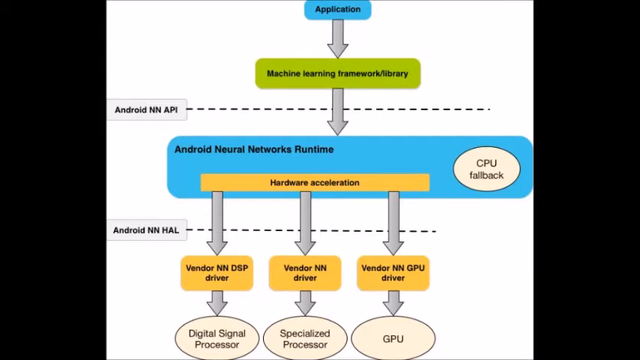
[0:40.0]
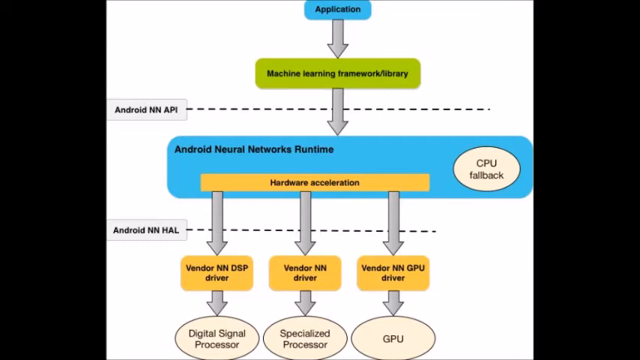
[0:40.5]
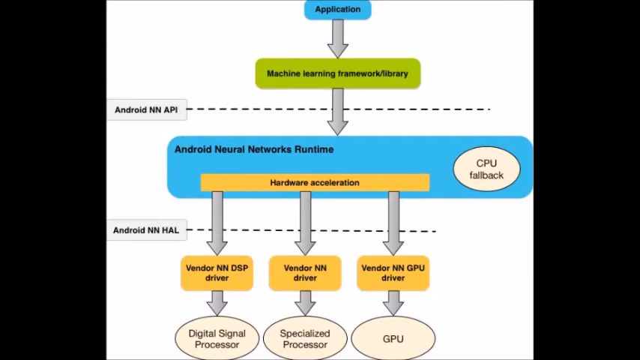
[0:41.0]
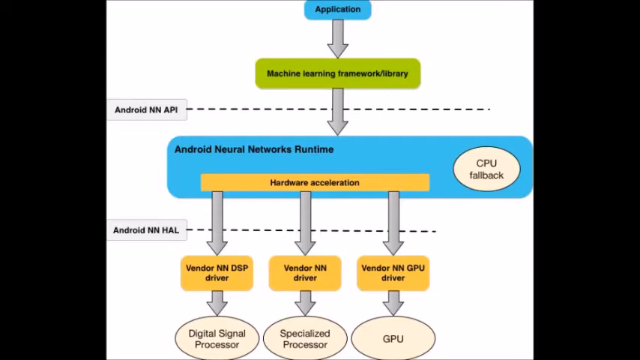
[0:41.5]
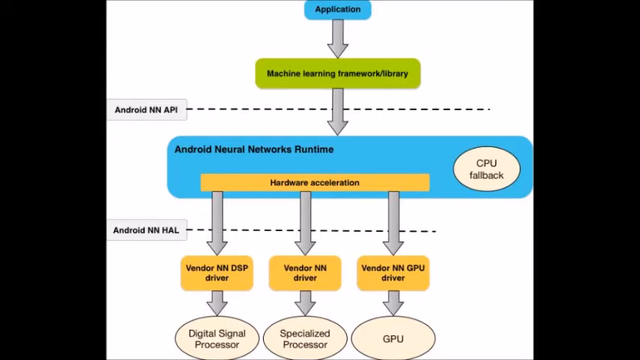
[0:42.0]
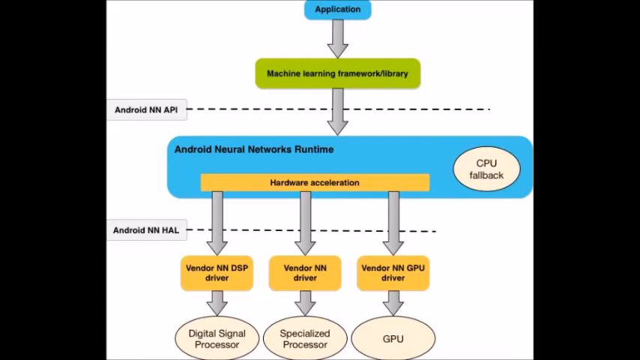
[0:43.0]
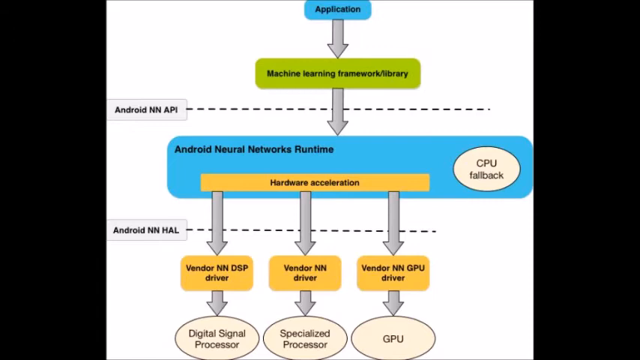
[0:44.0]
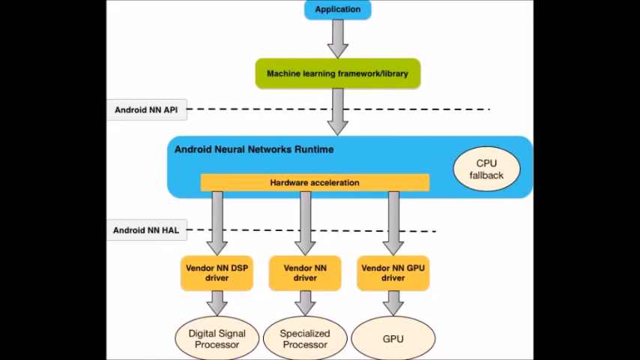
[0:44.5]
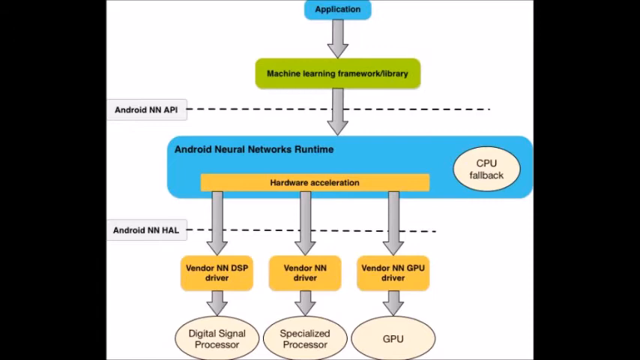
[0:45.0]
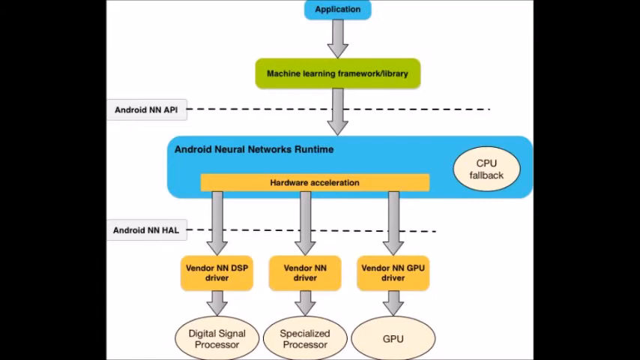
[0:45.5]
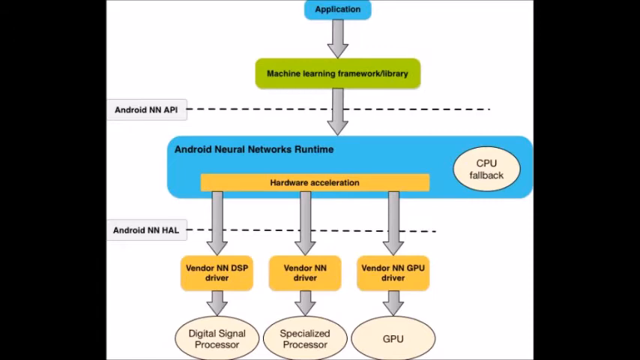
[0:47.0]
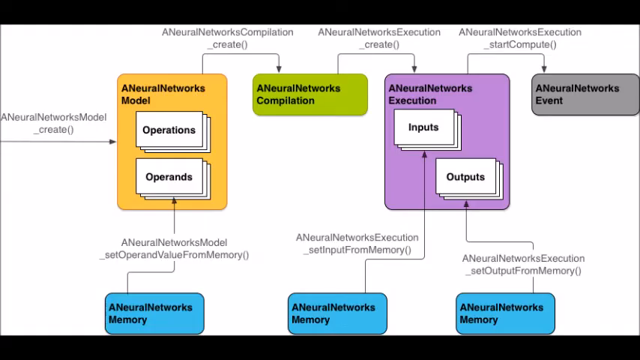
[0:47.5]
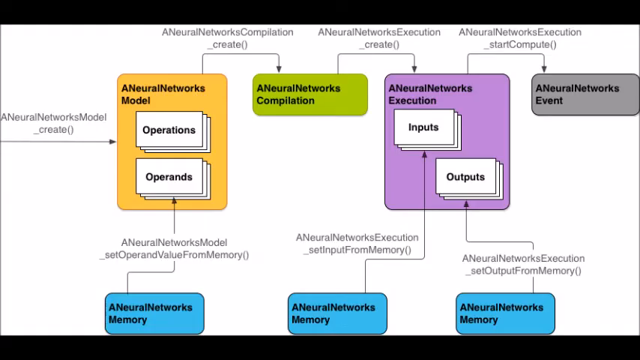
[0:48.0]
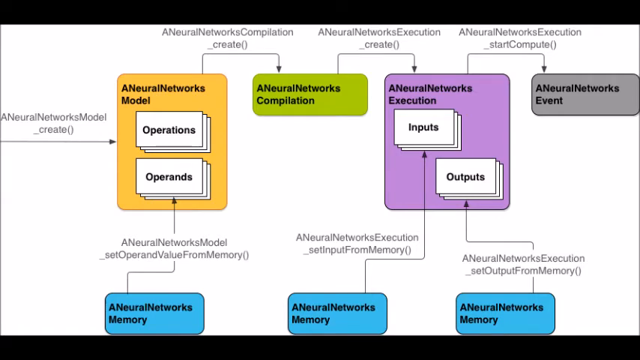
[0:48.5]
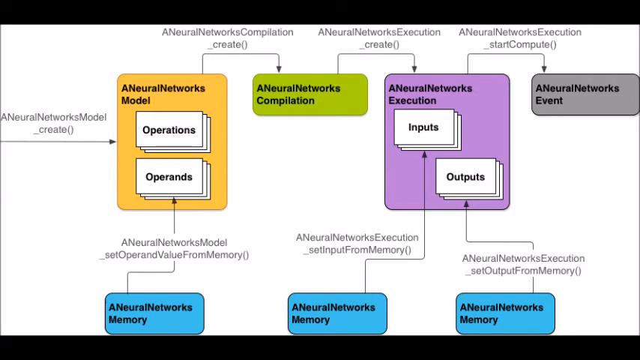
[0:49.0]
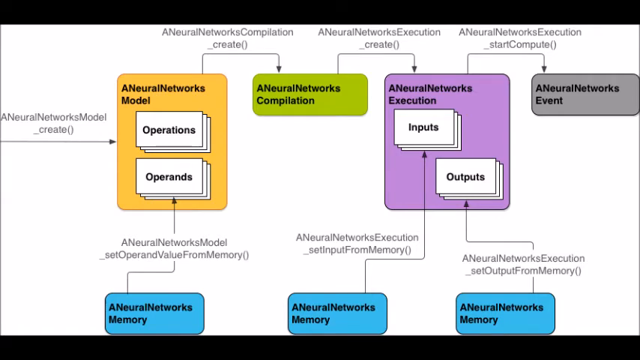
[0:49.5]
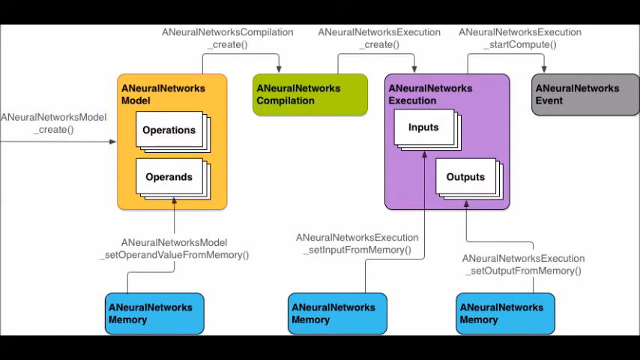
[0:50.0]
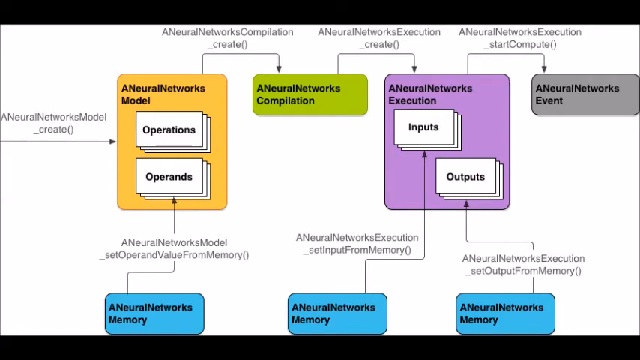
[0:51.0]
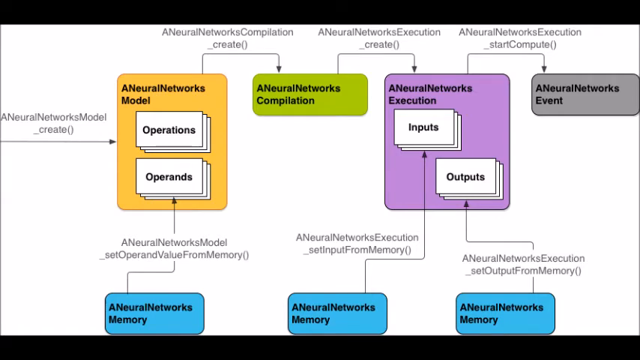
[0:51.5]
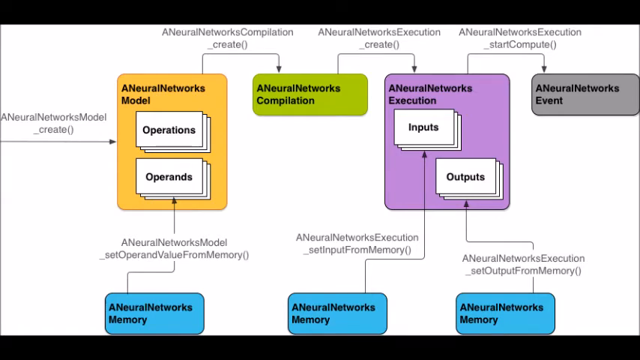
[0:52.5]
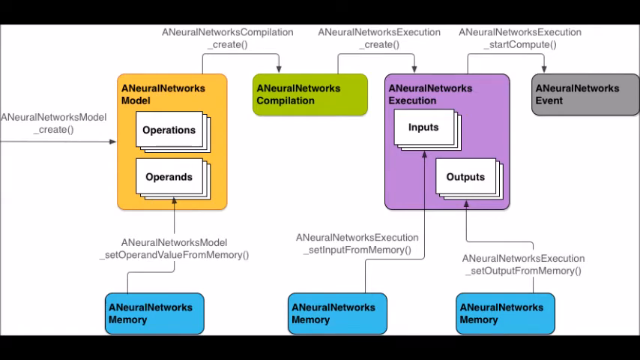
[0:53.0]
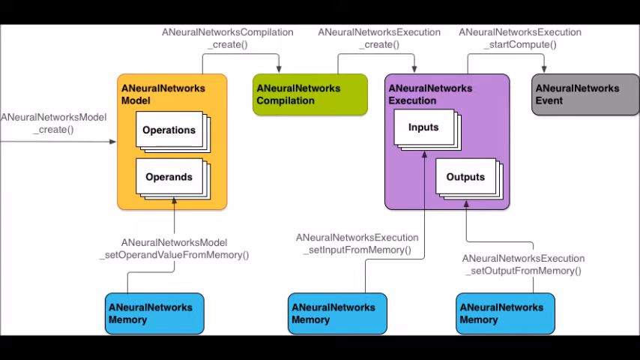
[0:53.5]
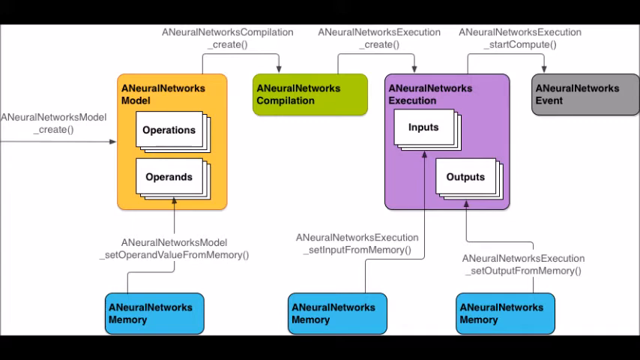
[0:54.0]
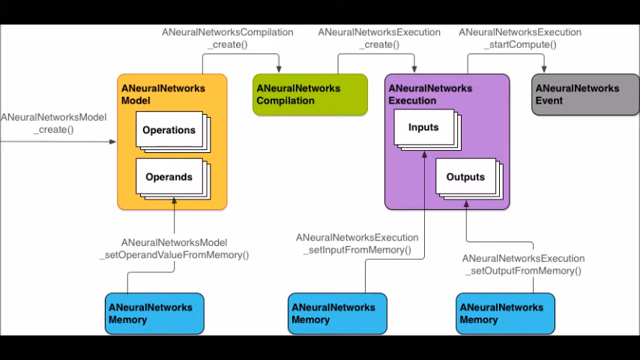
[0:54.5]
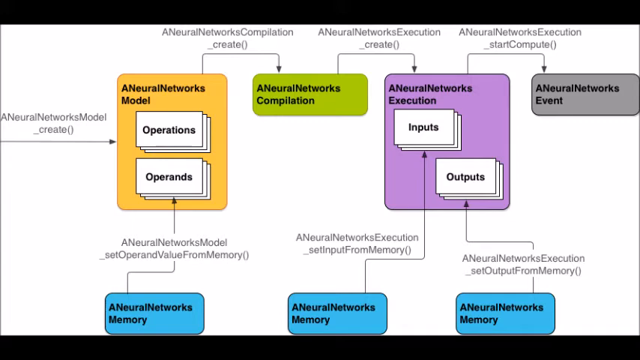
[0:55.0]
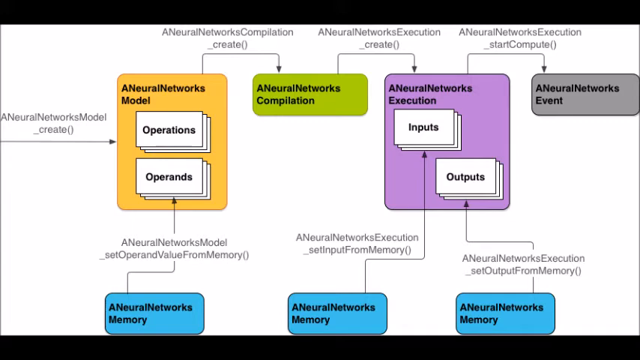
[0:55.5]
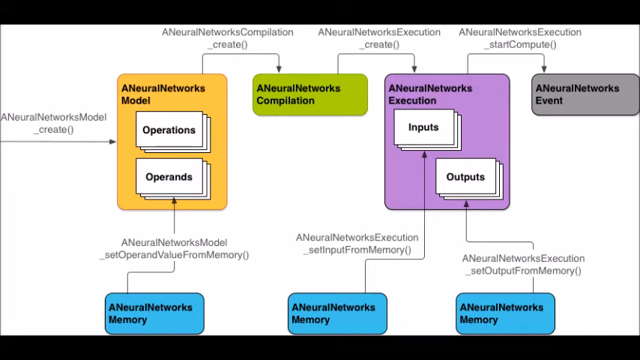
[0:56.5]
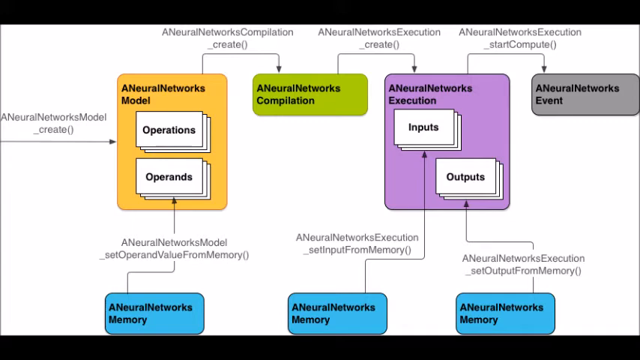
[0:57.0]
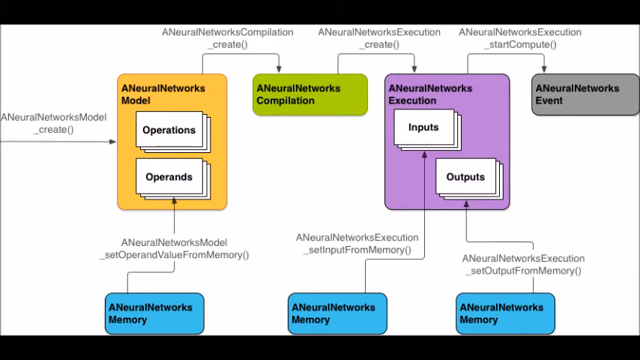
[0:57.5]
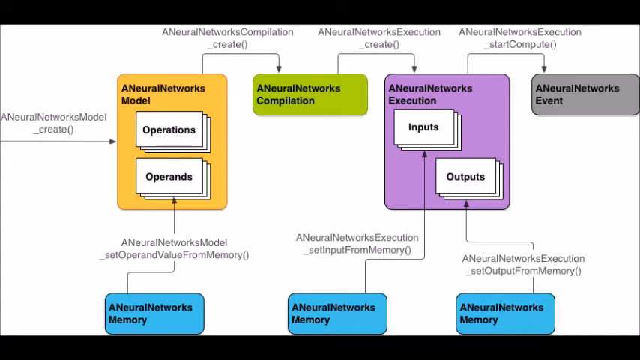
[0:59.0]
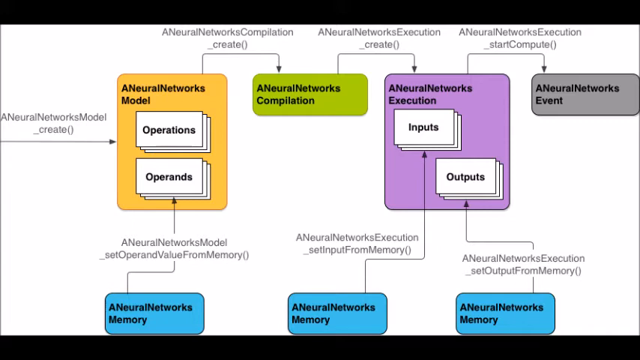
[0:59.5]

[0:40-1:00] The same diagram stays on screen. From the blue section at its bottom, there is a sort of orange banner that says "hardware acceleration" in black text, with three branches coming down from it. As the arrows go down from the hardware acceleration label, they cross horizontal dashed lines standing for the "android nn hal". Further down, the three sections seem to have different names, each with the same orange background as the hardware acceleration banner. From left to right they say "vendor nn dsp driver", "vendor nn driver" and "vendor nn gpu driver". A bit later, another graph starts to appear.